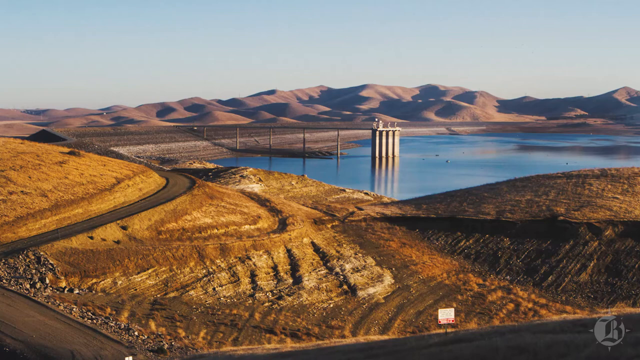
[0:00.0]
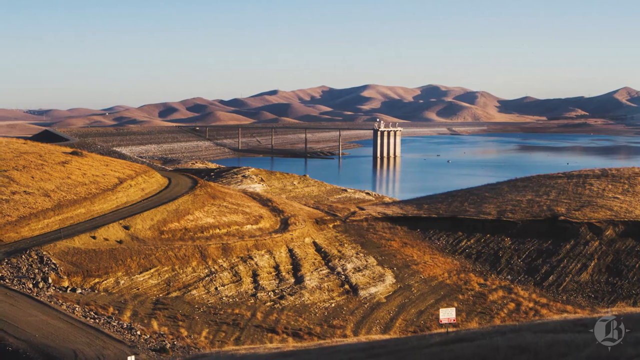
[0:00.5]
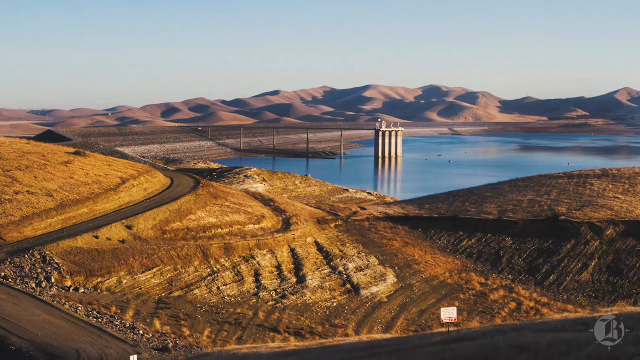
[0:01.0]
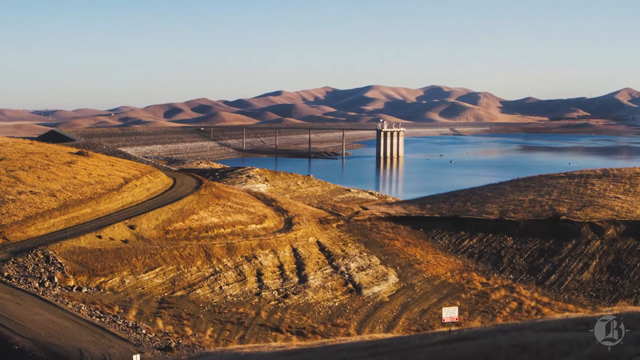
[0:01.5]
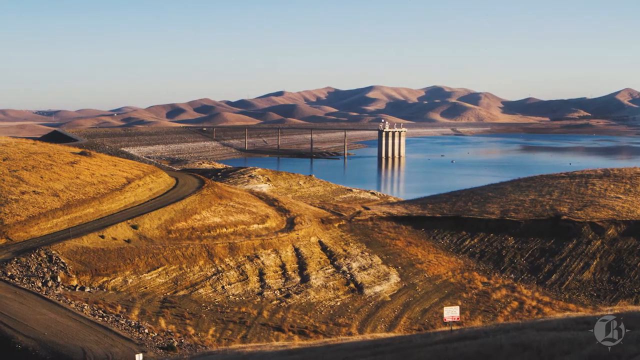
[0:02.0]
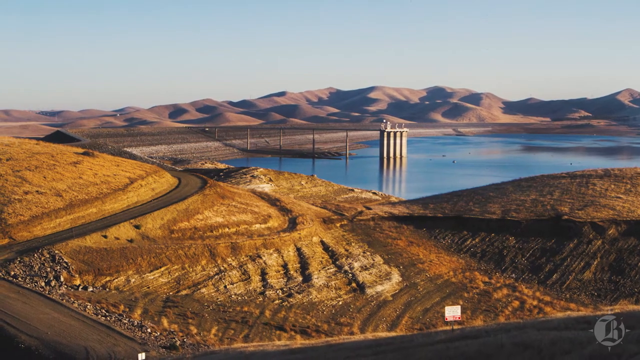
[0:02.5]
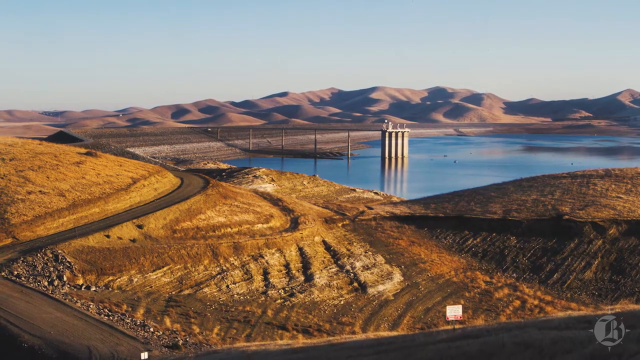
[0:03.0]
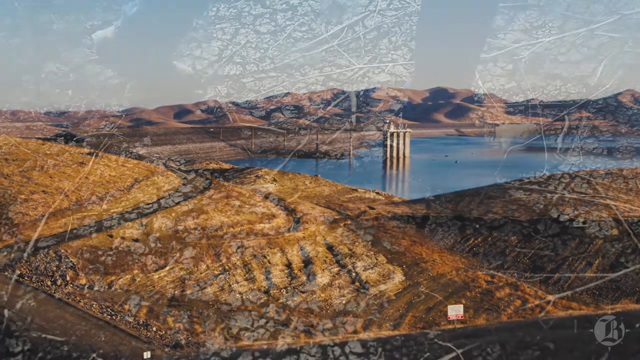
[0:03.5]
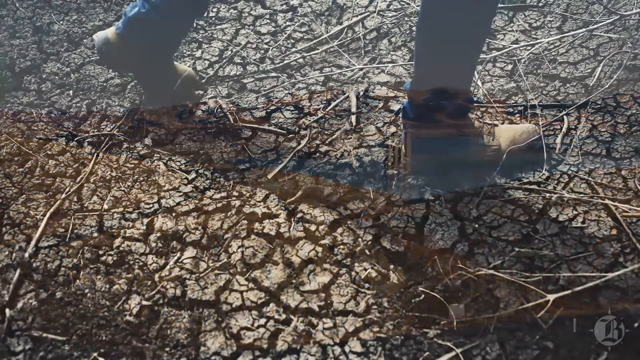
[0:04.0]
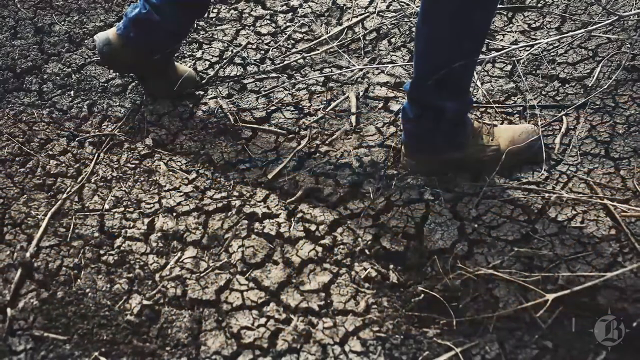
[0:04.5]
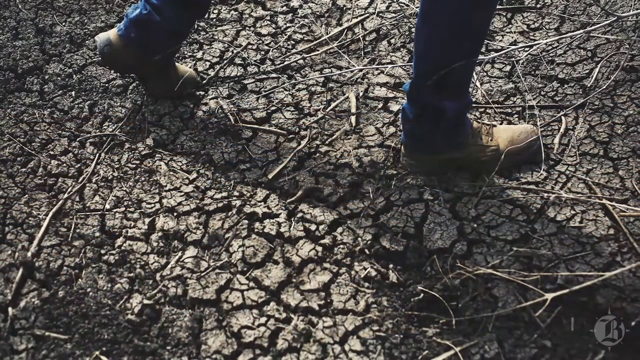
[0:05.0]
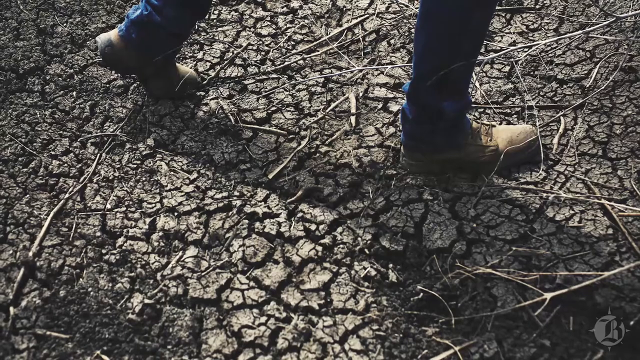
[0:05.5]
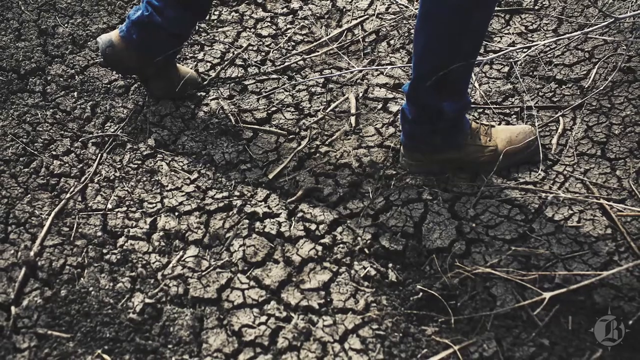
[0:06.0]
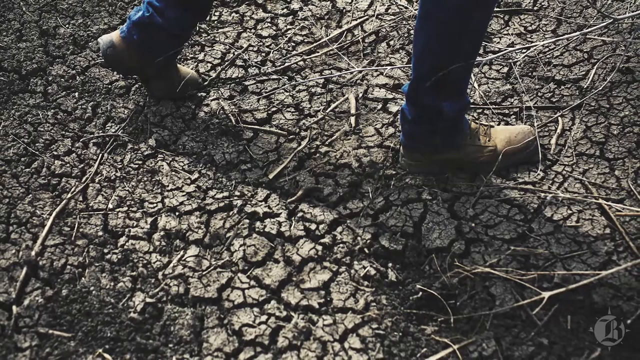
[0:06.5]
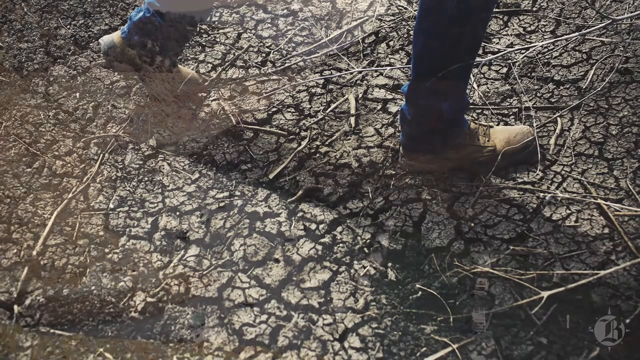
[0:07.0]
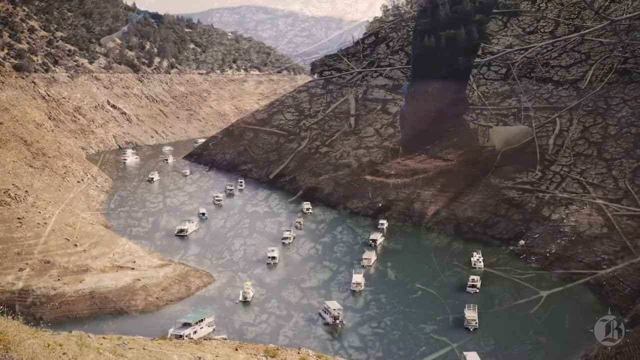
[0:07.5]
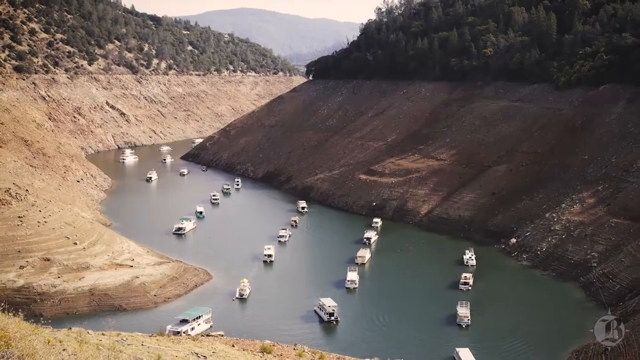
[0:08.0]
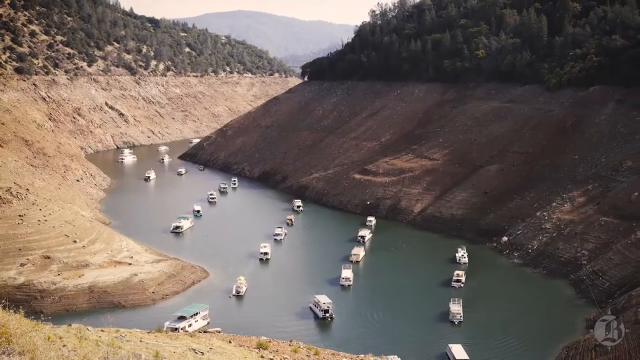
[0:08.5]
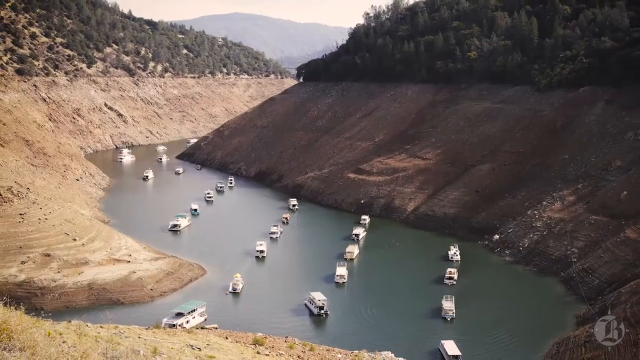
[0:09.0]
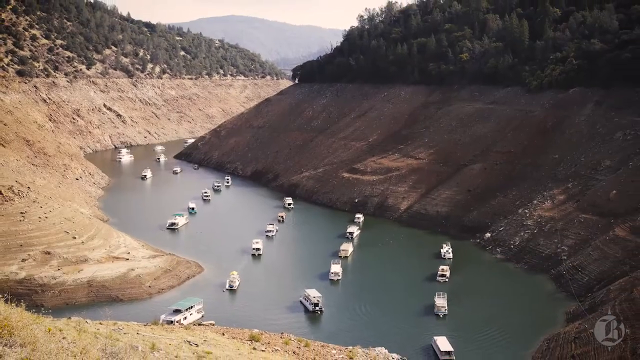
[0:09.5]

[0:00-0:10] A bridge leads up to four very tall concrete columns at what looks like a reservoir or something similar. The sky is sunny but a little cloudy. In the distance there appear to be sand dunes or mountains, and the foreground shows barren hillsides. A road wraps and curves around on the left side. The picture slowly zooms out. Then the ground is shown, very dry and cracked. There is likely a man in blue jeans, seen only from the bottom of his jeans down, wearing tan work boots; his right foot is planted and his left is on the ball as he moves. A few dead branches lie around. The picture zooms out and fades, transitioning to a river cutting through a forest, with a slope on each side. The forest is visible at the top on each side, with quite a huge gap of dirt below. Boats are lined up on the river in diagonal lines, parked in the river area. The water is fairly still, though no reflection is visible, suggesting some movement.